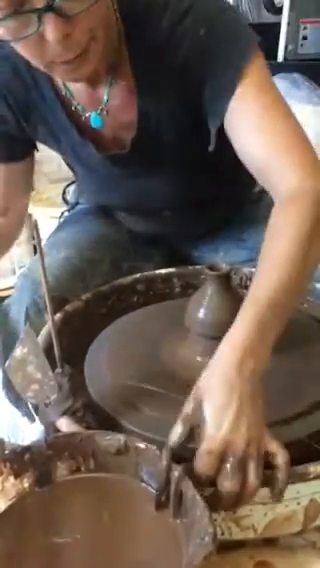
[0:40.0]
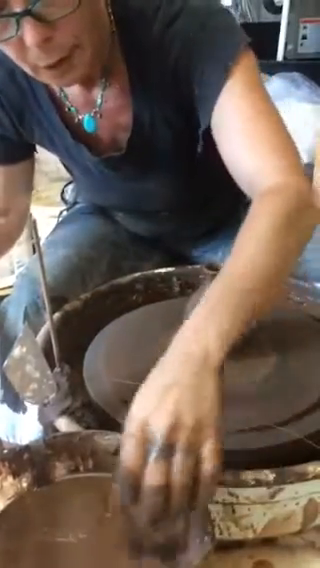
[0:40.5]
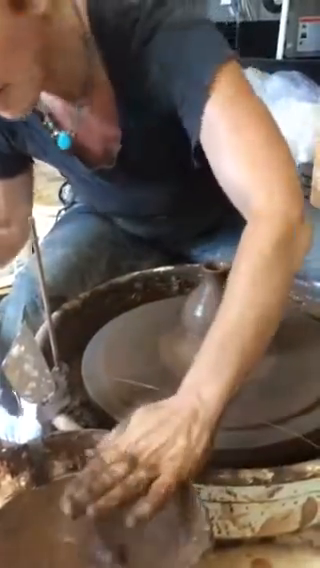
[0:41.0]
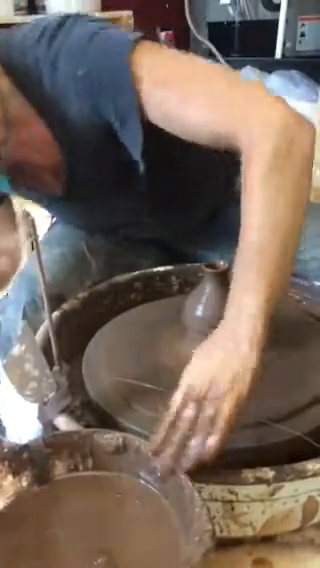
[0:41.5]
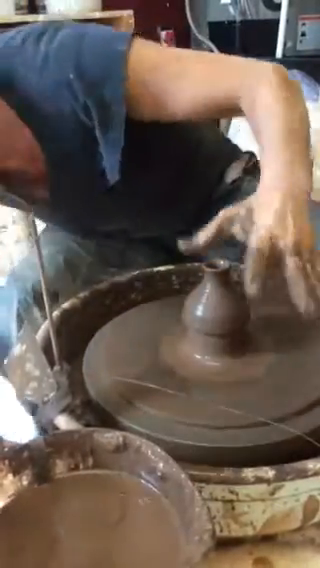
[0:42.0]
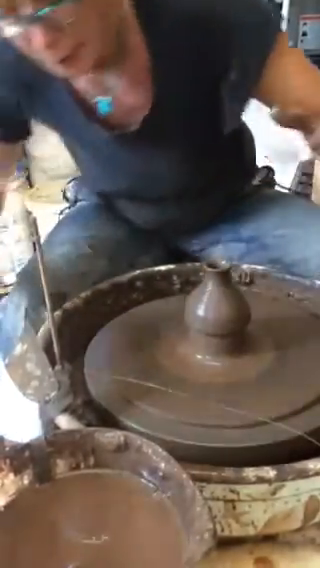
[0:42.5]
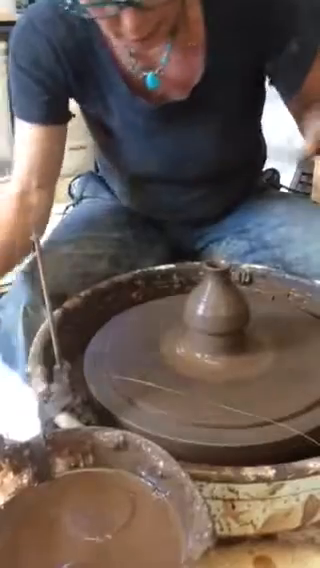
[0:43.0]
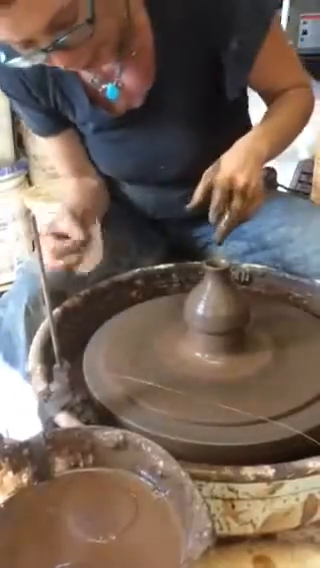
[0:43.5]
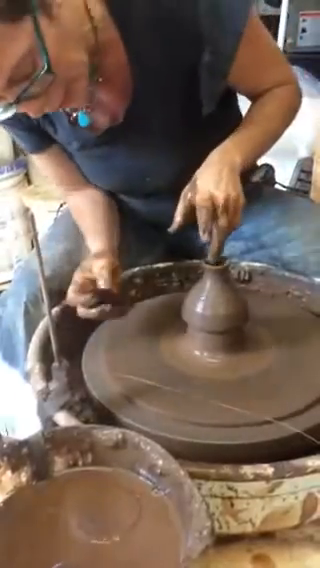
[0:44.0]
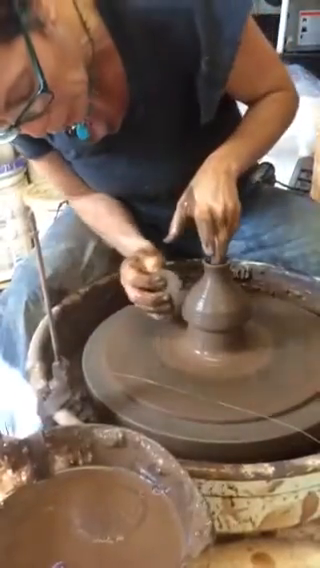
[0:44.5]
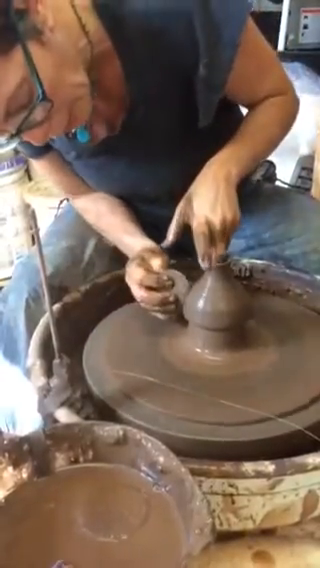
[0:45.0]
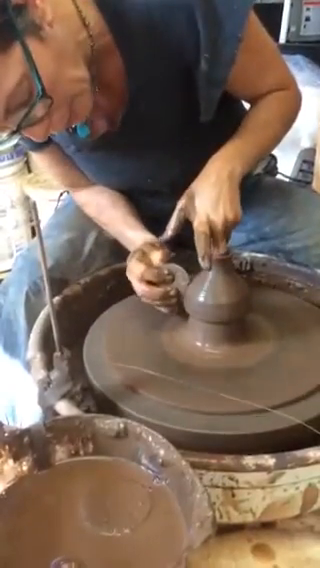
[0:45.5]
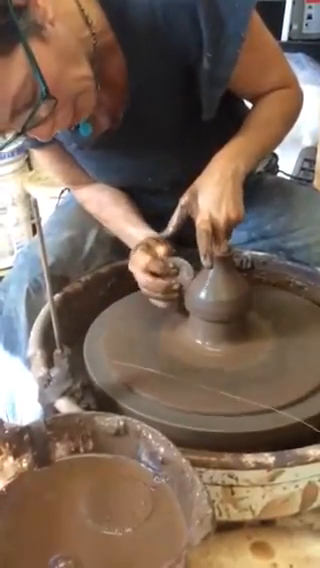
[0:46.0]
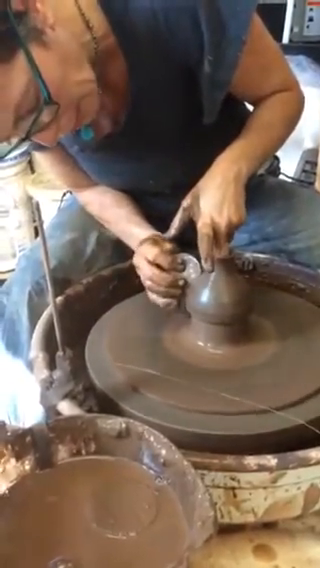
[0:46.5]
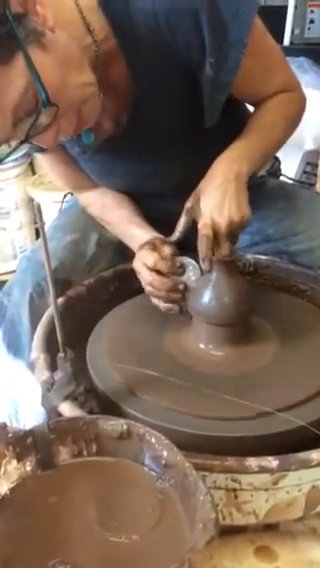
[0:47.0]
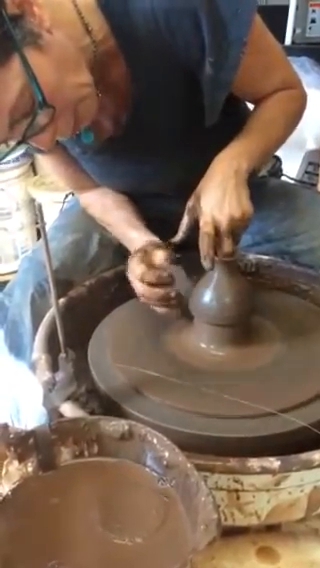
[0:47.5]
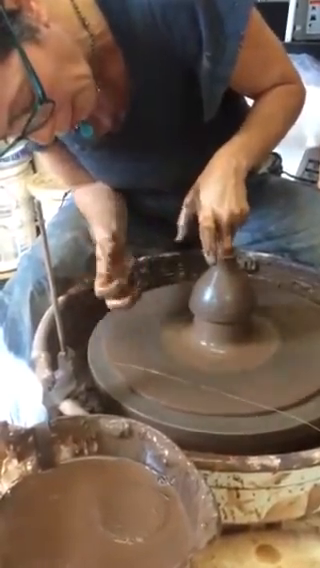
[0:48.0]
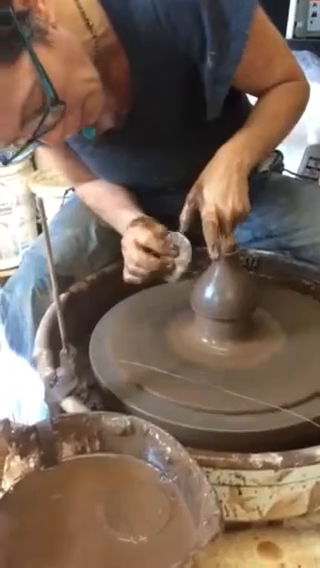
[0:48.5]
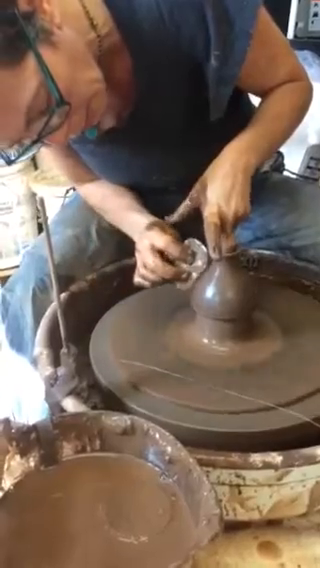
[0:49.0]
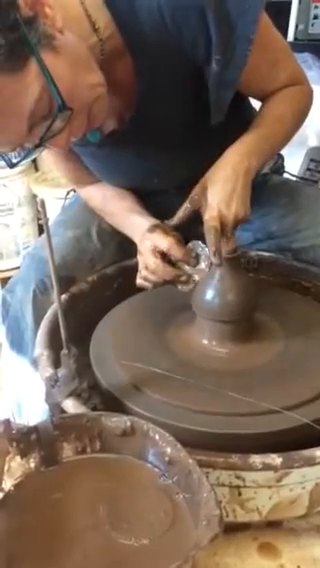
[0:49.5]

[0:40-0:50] The woman, in a navy blue top, denim jeans, a turquoise bead necklace and blue glasses, pushes something into the clay water and scrapes her hands on the edge to remove excess clay. She then reaches for what appears to be a piece of paper or some sort of tool to help shape the vase, which is still spinning on the pottery wheel. Slowly and intently she shapes the sides of the vase as it spins quickly, seeming to talk and explain what she is doing. She continues shaping the vase with precision.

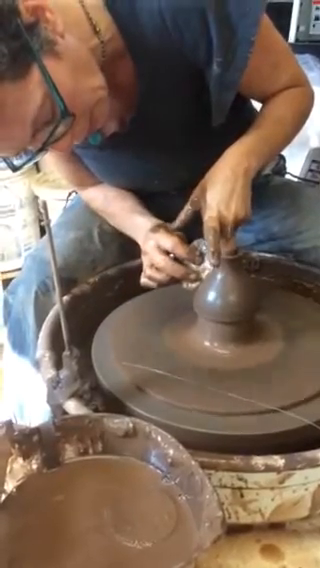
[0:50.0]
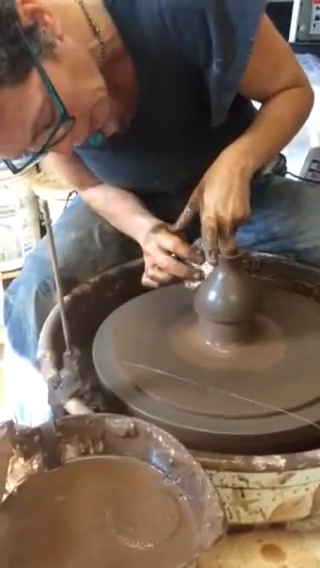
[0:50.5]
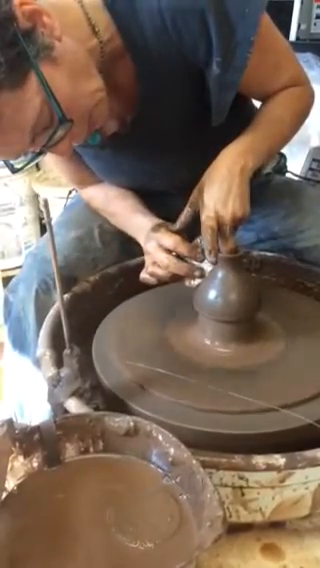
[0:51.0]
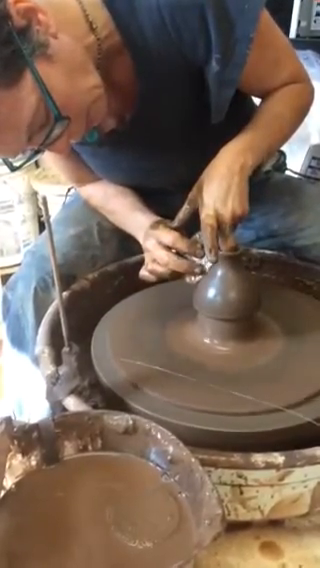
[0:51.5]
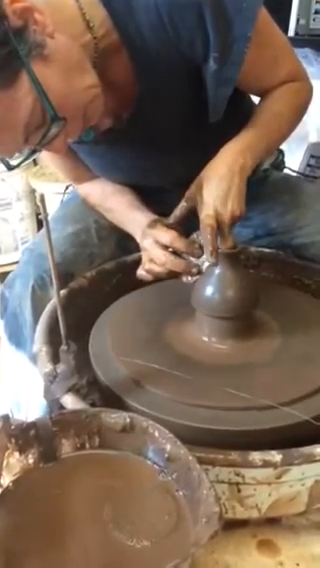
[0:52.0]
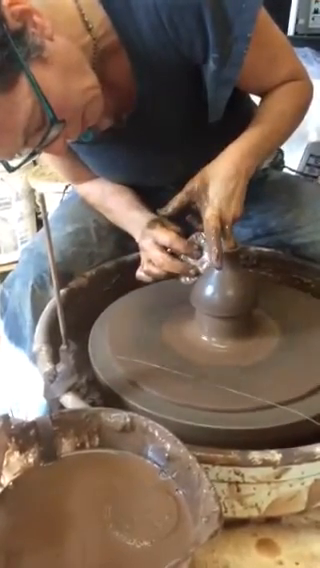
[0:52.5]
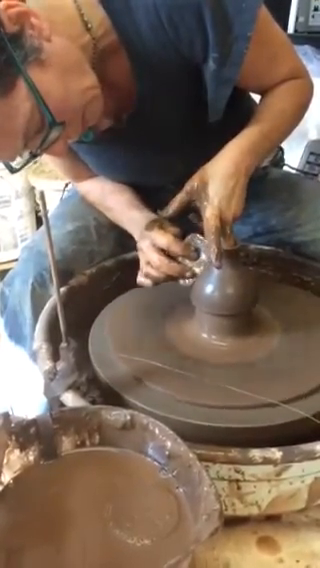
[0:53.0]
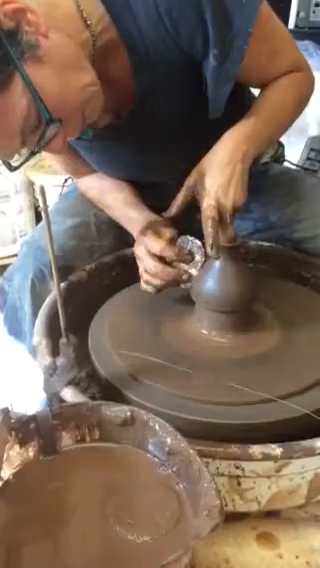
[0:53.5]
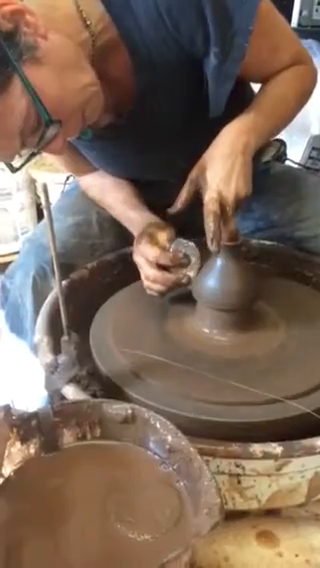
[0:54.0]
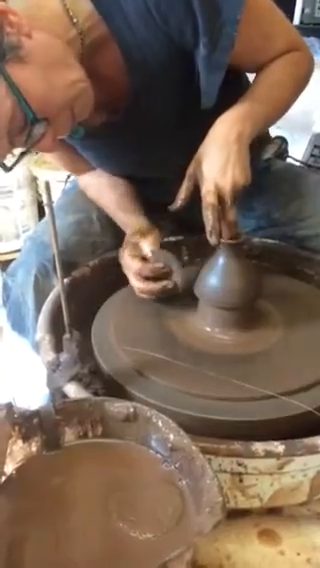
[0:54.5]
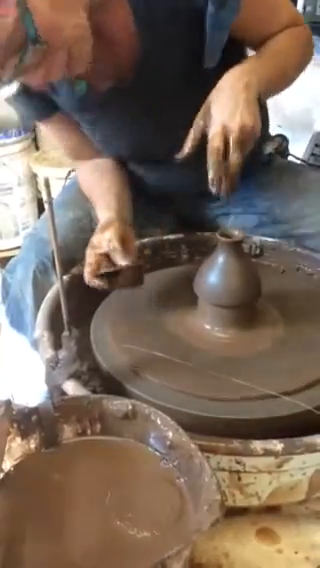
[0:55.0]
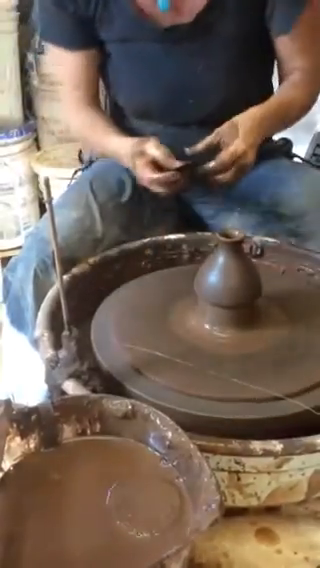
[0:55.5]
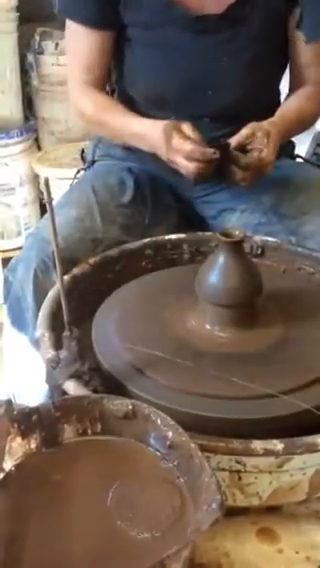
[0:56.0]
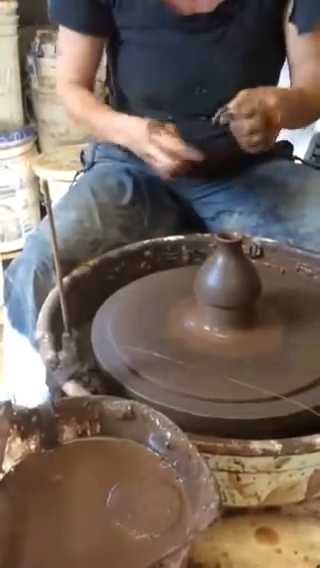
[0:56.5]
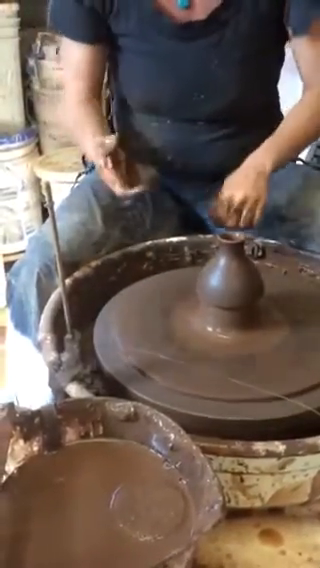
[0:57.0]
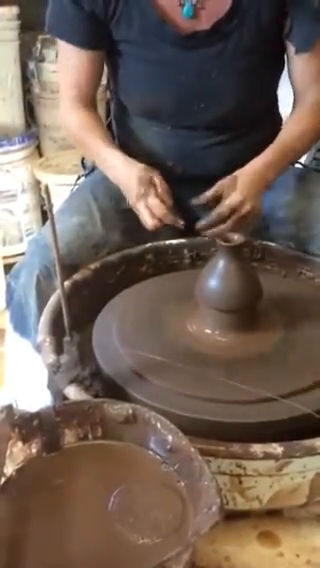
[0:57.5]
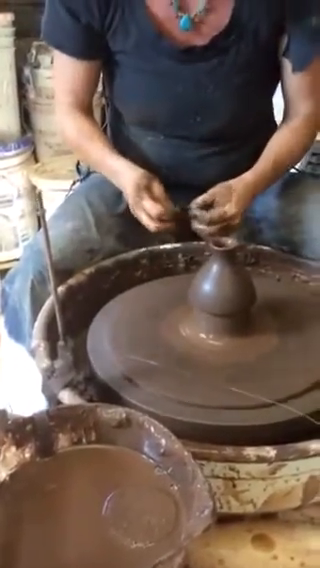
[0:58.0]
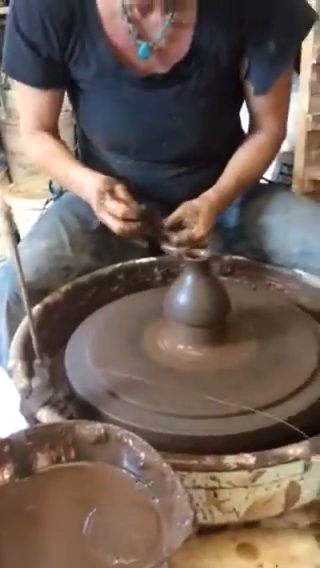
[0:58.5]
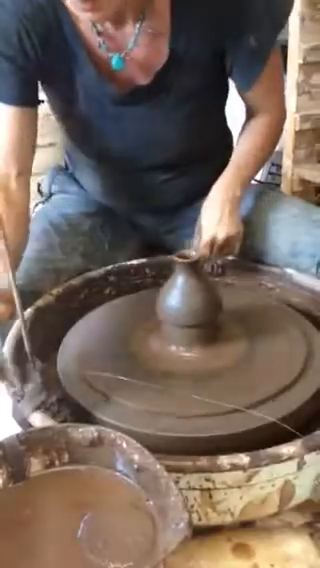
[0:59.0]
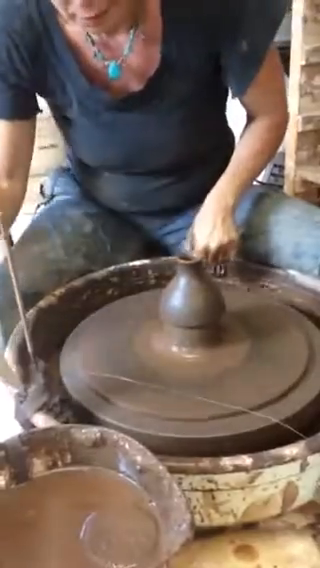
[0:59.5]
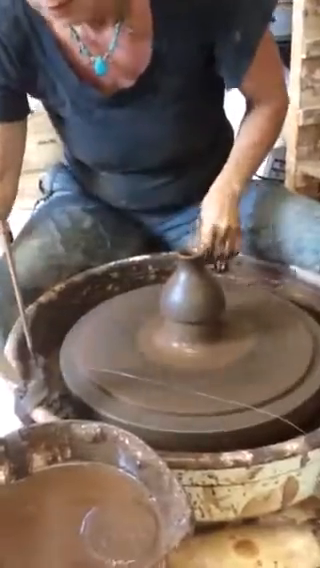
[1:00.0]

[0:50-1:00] The woman in the navy blue top, denim jeans, turquoise bead necklace and blue glasses is leaned over the spinning pottery wheel, using her piece of paper or tool to intently shape the outside of the vase. She is a potter molding the wet clay into the shape of a vase as the wheel spins quickly. In the foreground is a tub of water with a brown appearance from clay. She continues shaping the clay vase. The scene seems to be a pottery studio, with white clay-filled buckets and a kiln in the background.